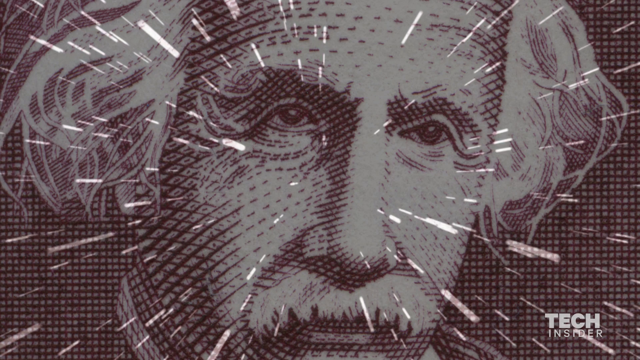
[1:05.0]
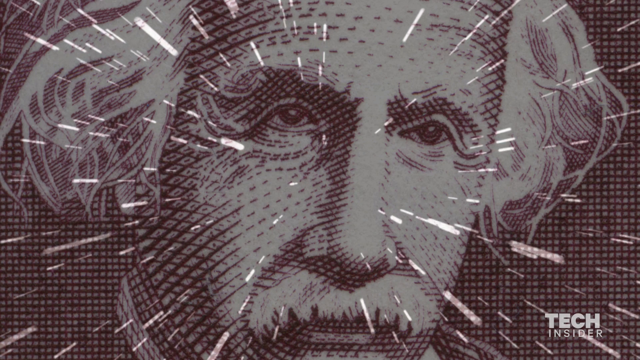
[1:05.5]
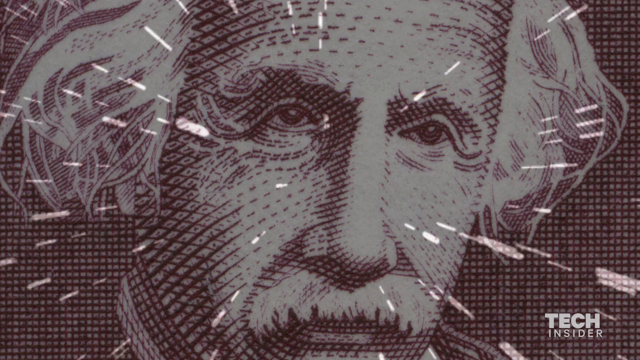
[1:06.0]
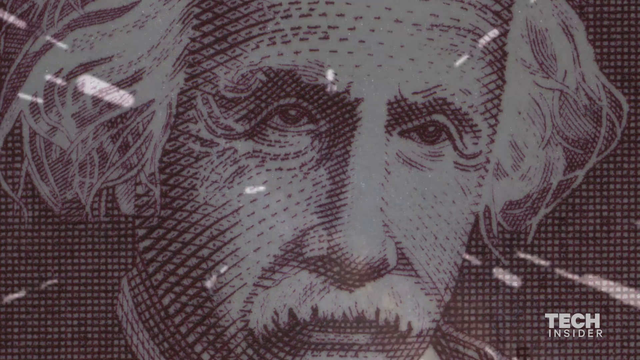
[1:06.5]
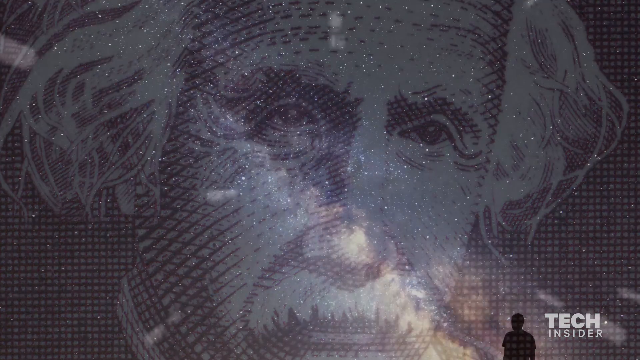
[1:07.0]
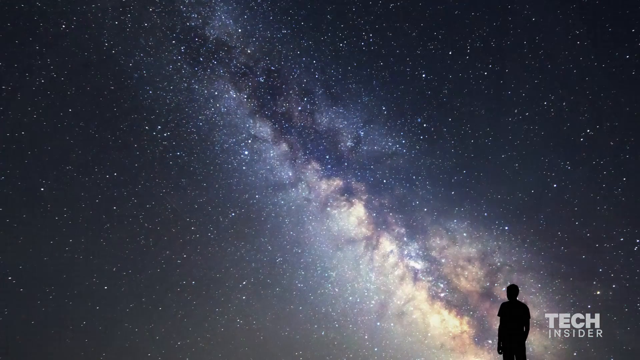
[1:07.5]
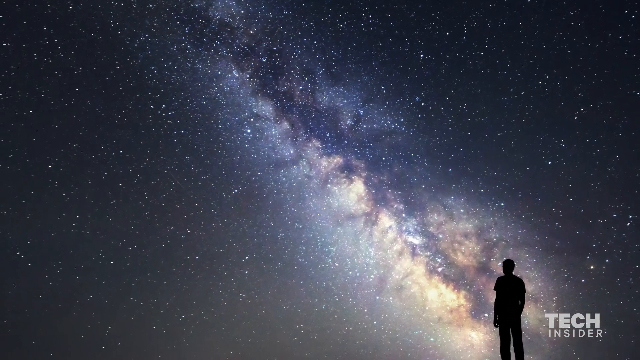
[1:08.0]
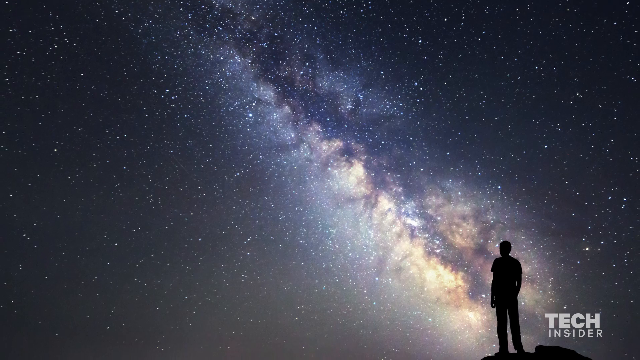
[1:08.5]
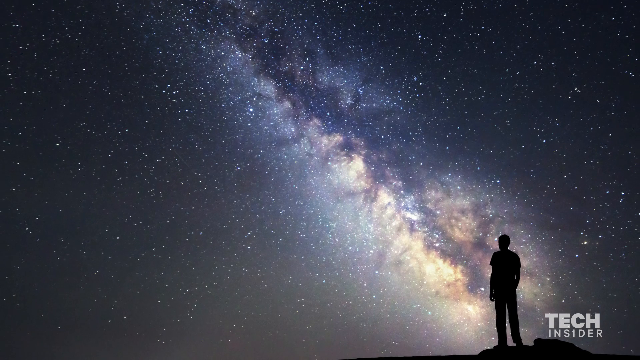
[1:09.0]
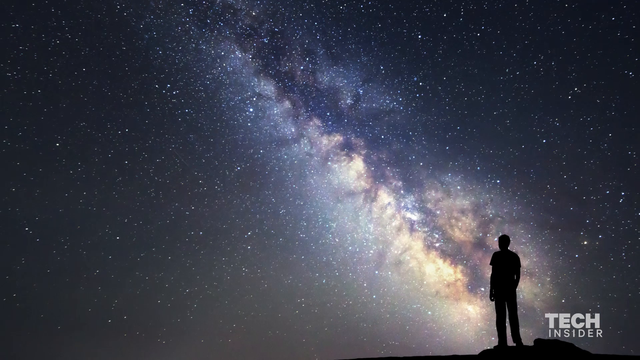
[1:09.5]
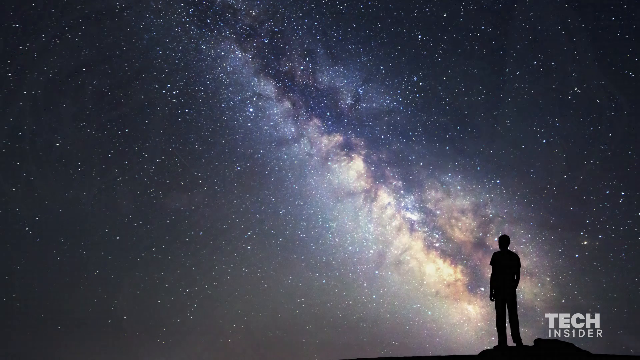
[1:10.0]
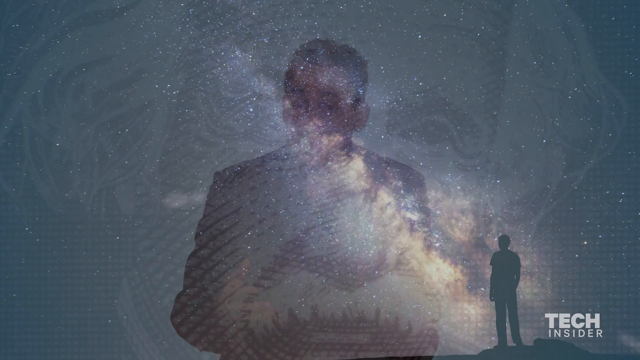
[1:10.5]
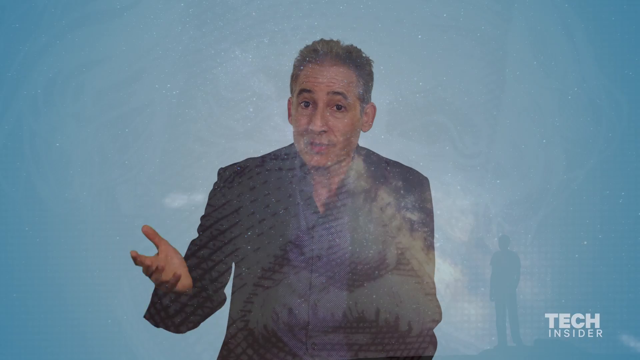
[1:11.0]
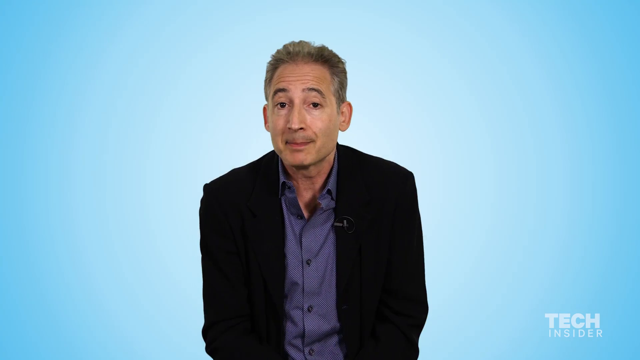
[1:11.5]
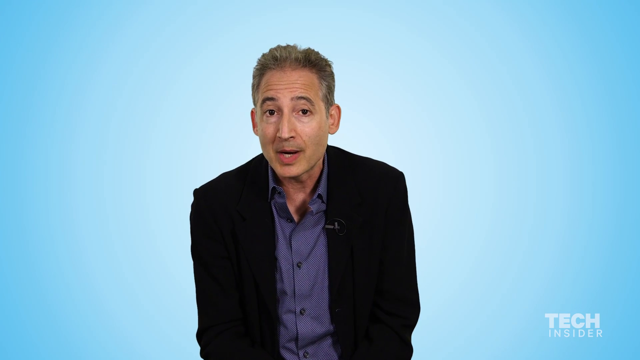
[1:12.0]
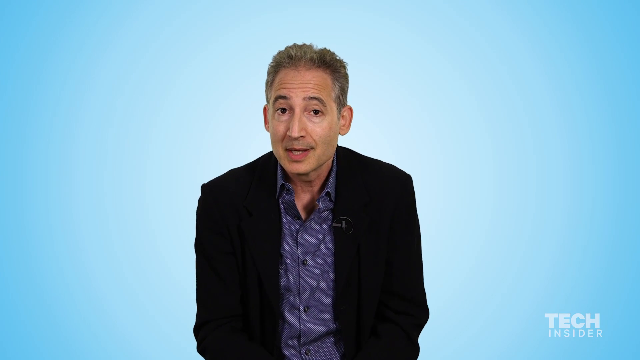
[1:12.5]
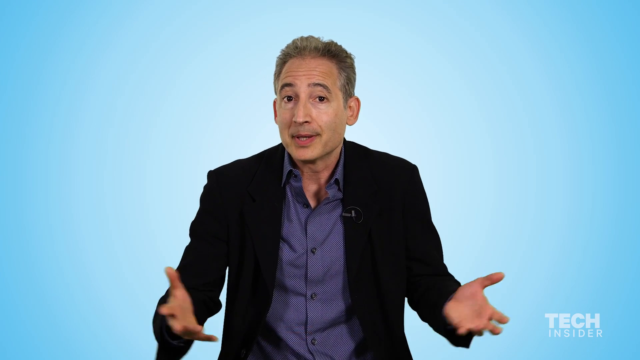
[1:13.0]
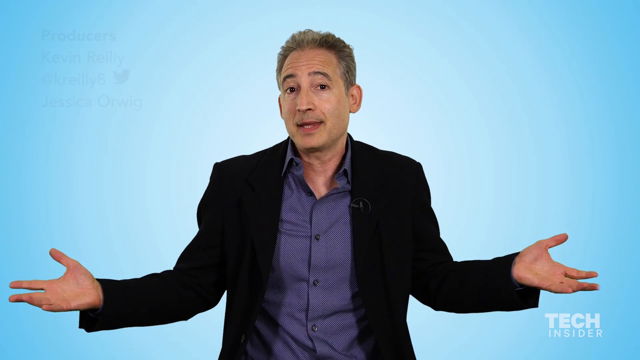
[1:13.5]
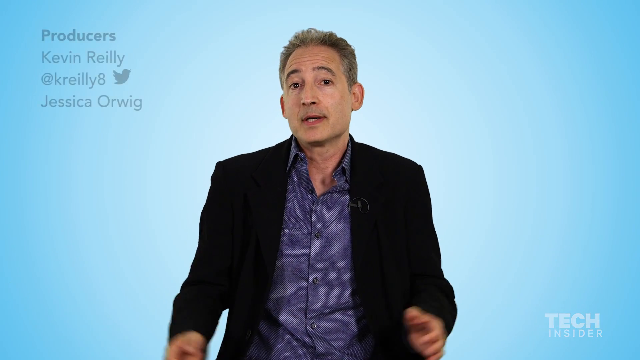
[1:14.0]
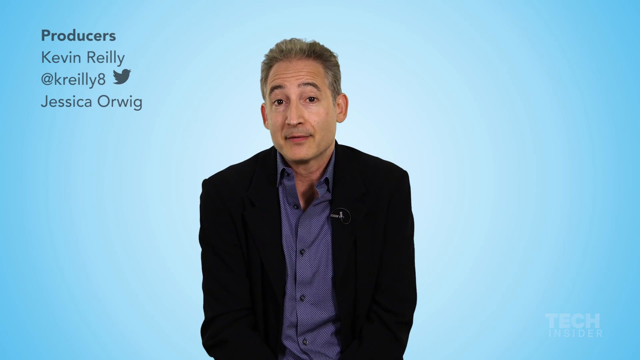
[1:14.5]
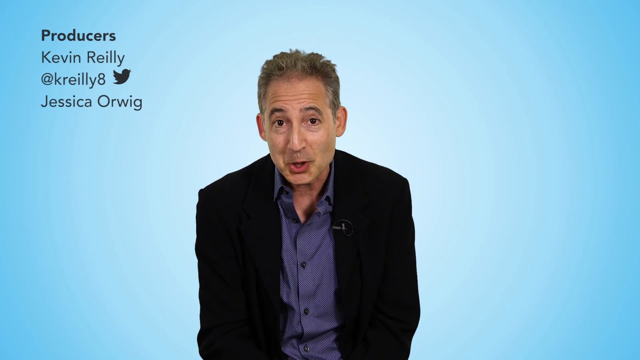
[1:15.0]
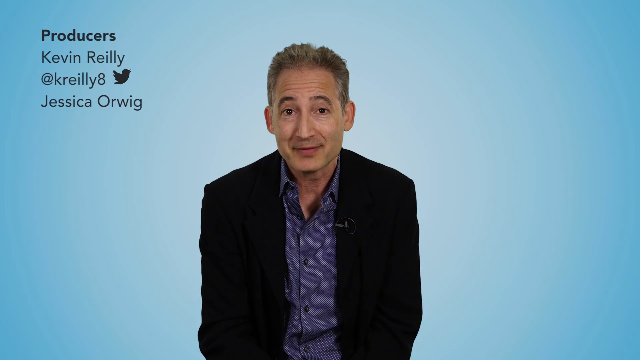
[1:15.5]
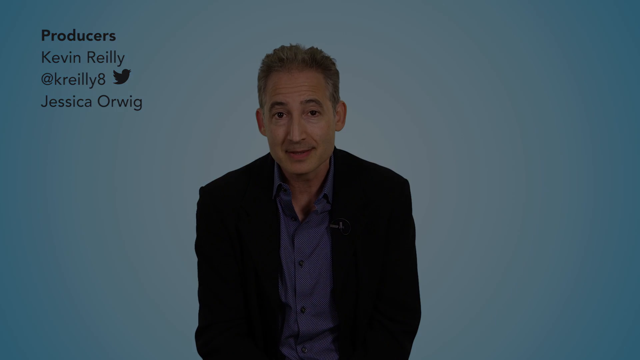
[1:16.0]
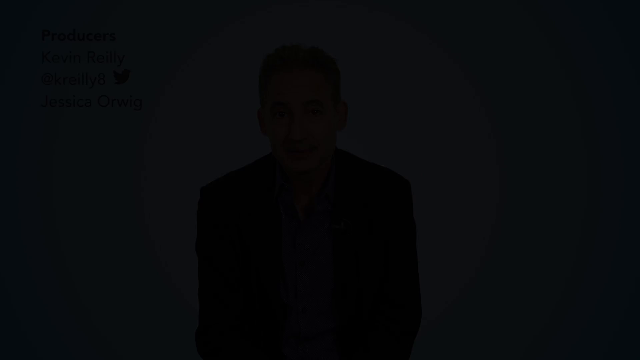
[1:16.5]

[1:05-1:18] The portrait of Einstein continues with a hyperspace-like effect. The scene then shifts to the universe above, with stars and space, as a silhouetted man looks up into the sky. The video ends with a man, apparently Brian Green, looking at the camera and speaking again. To his left are a few credit words reading "producers," "Kevin Riley," then a handle reading "K Riley 8" with a little Twitter bird, and beneath that "Jessica Orwig." The video then fades to black.